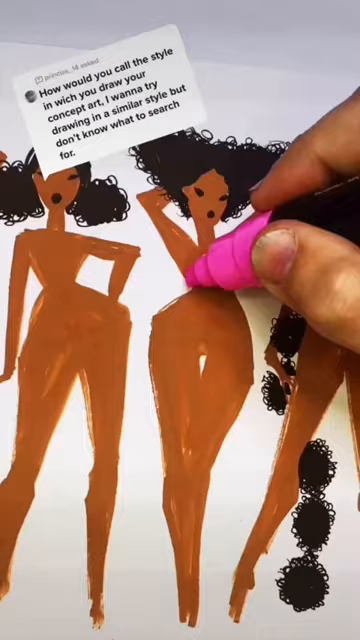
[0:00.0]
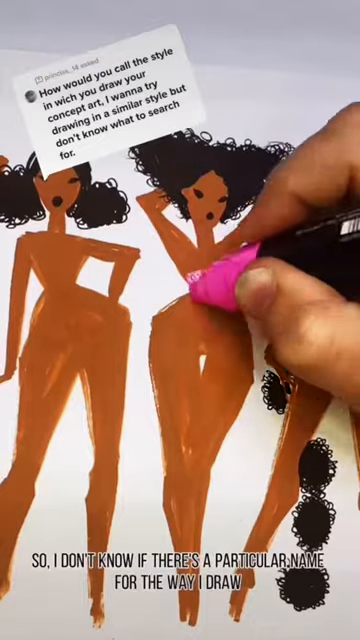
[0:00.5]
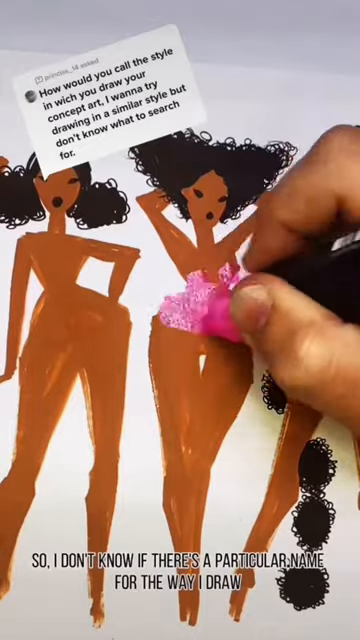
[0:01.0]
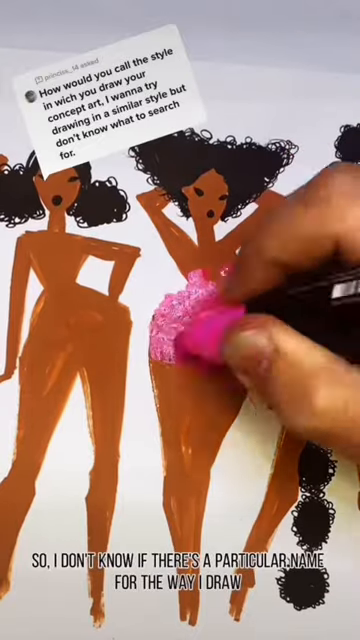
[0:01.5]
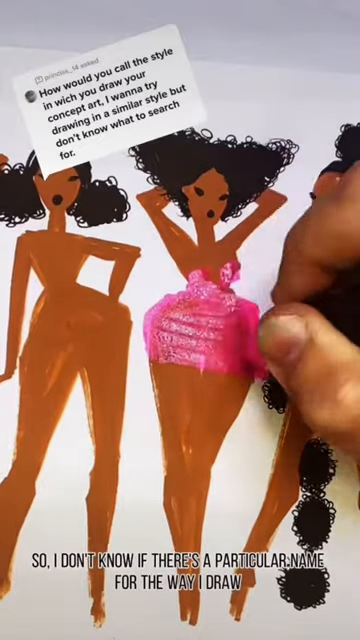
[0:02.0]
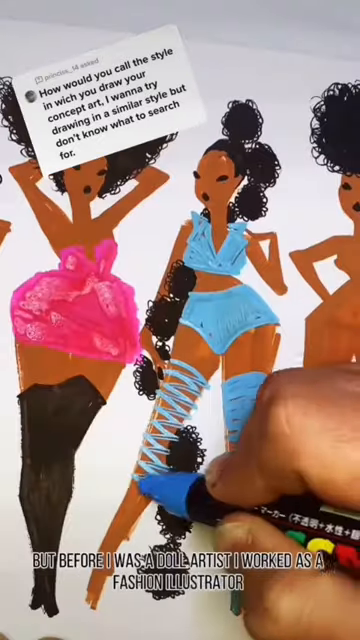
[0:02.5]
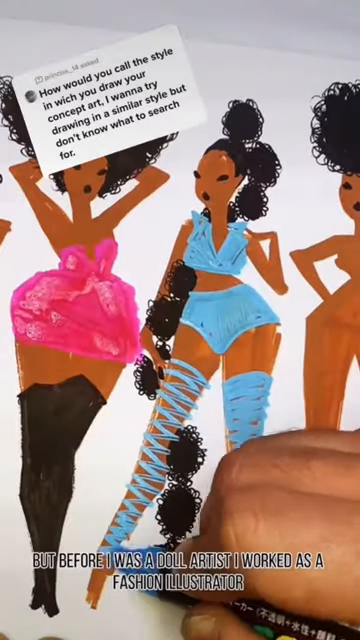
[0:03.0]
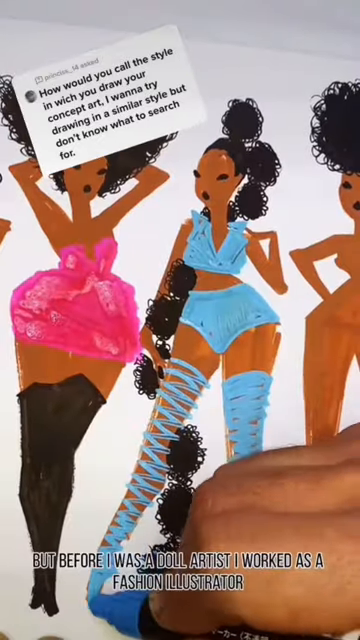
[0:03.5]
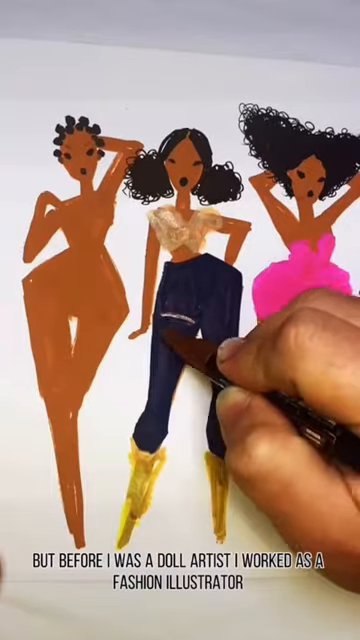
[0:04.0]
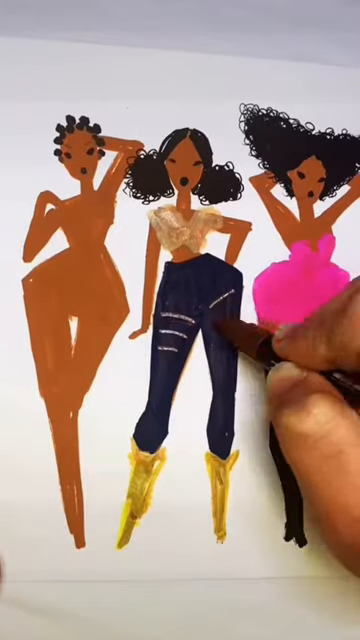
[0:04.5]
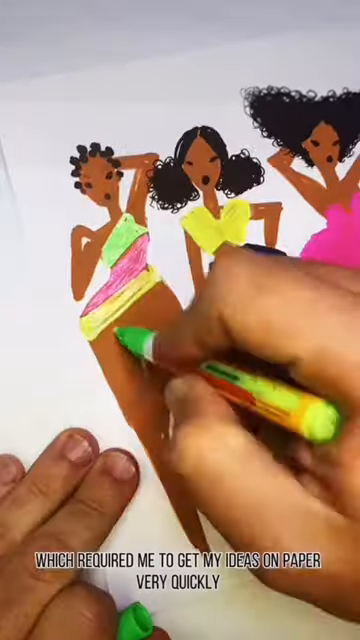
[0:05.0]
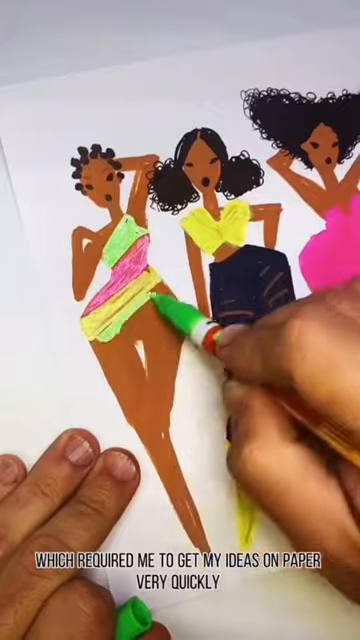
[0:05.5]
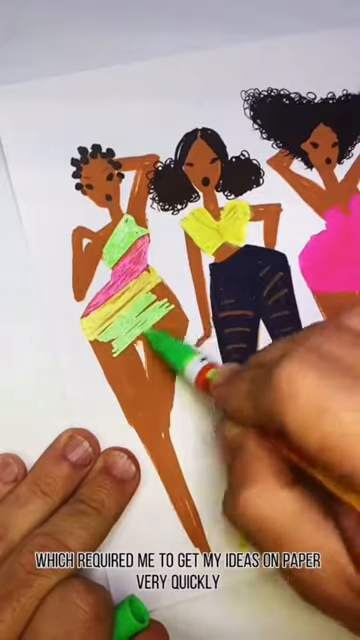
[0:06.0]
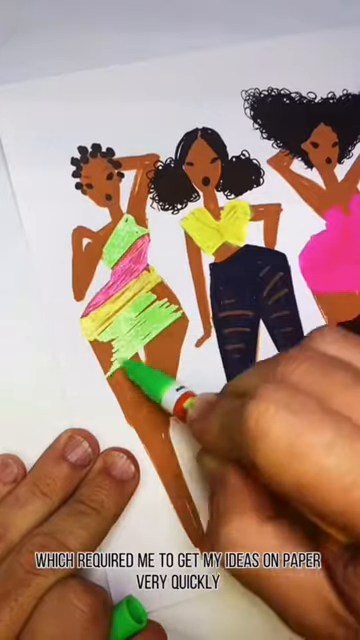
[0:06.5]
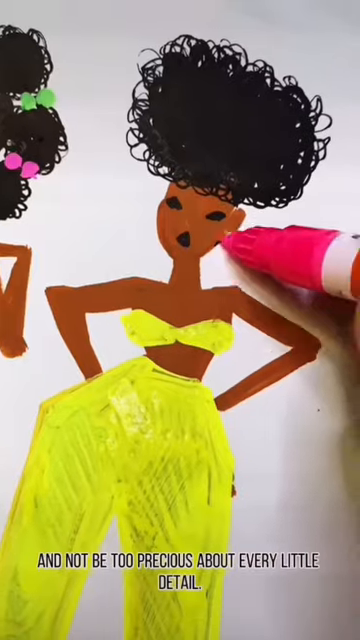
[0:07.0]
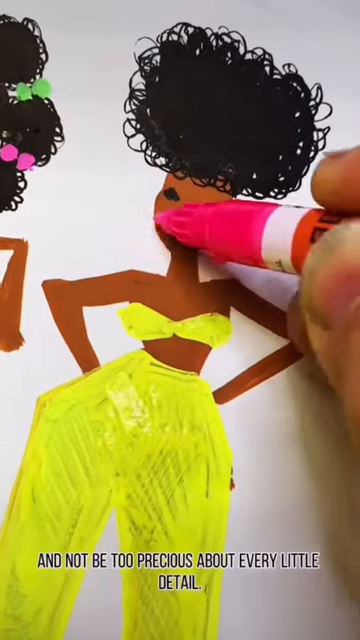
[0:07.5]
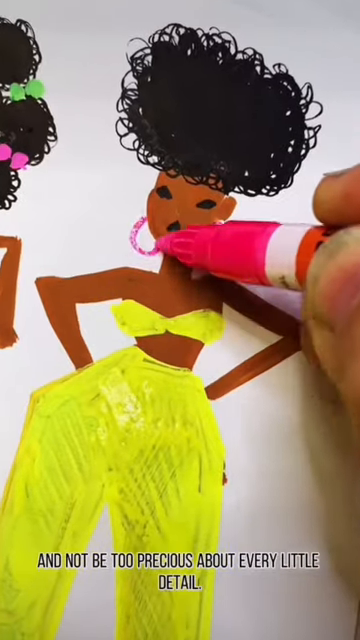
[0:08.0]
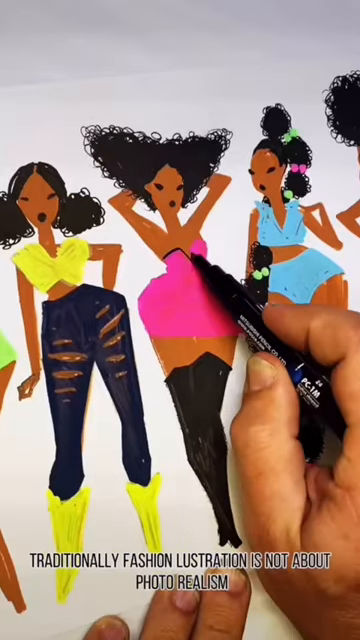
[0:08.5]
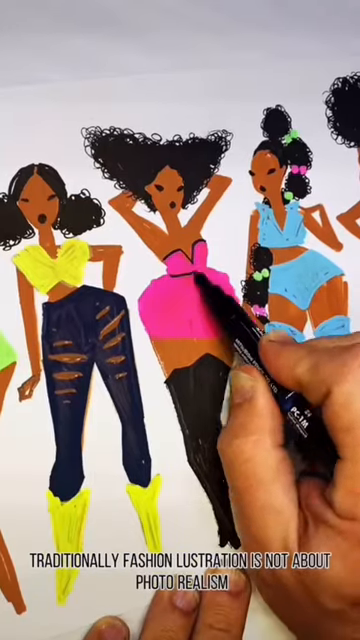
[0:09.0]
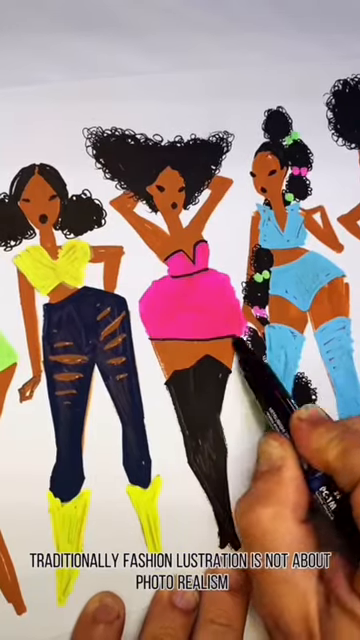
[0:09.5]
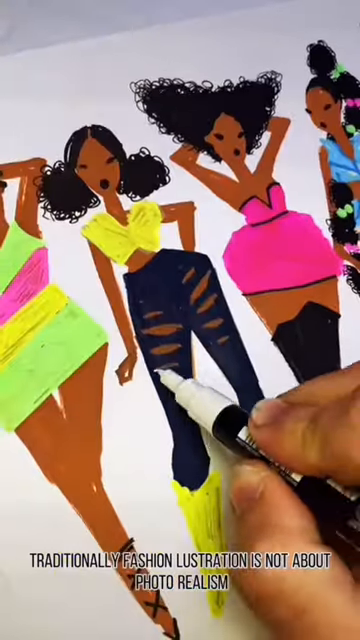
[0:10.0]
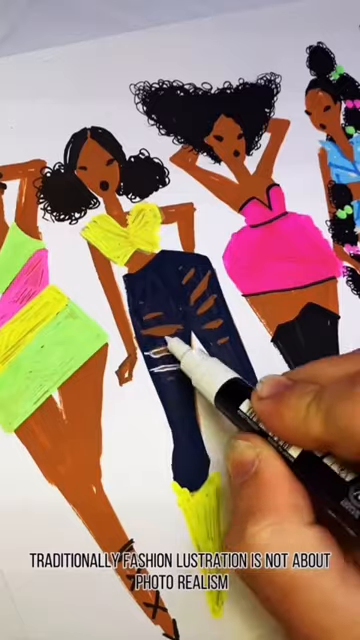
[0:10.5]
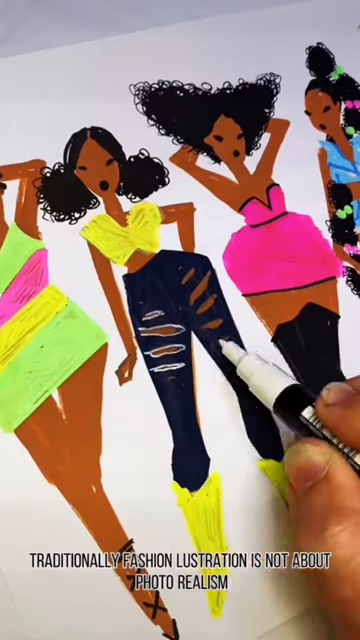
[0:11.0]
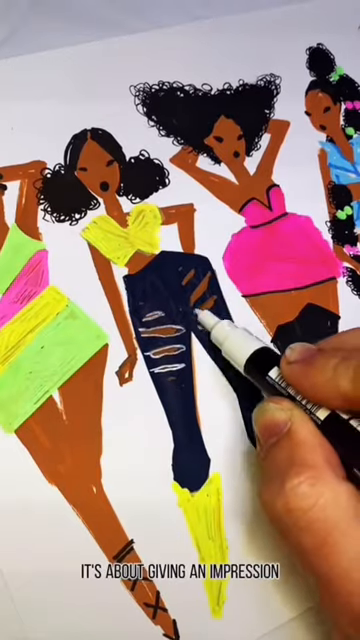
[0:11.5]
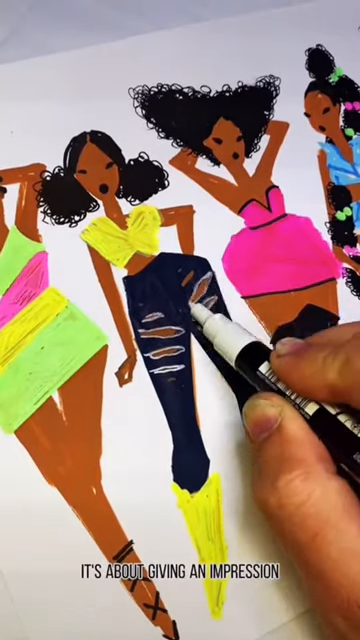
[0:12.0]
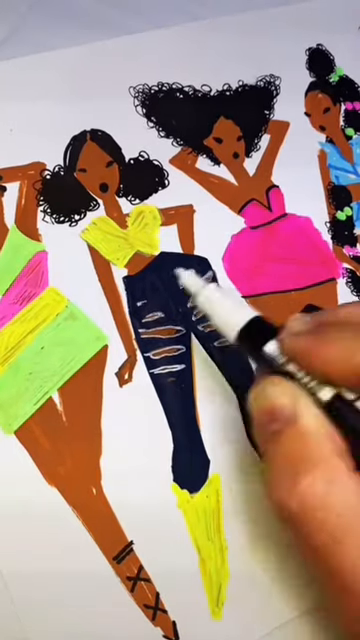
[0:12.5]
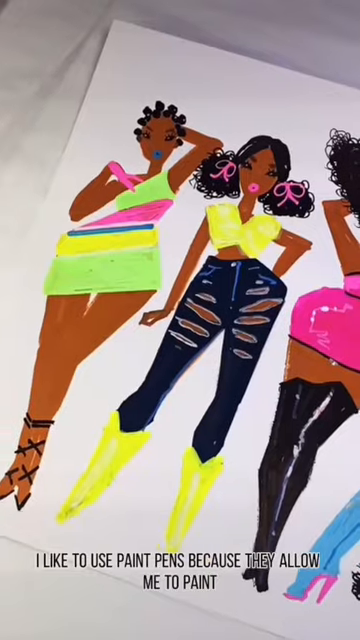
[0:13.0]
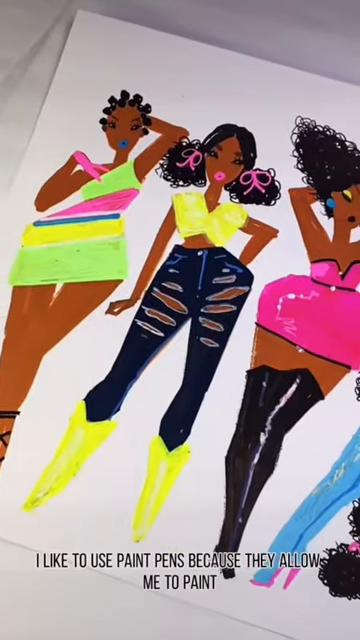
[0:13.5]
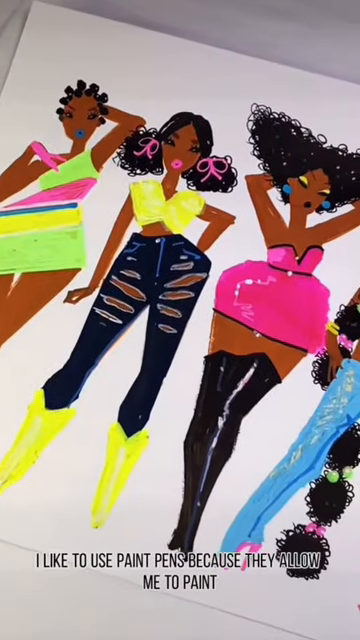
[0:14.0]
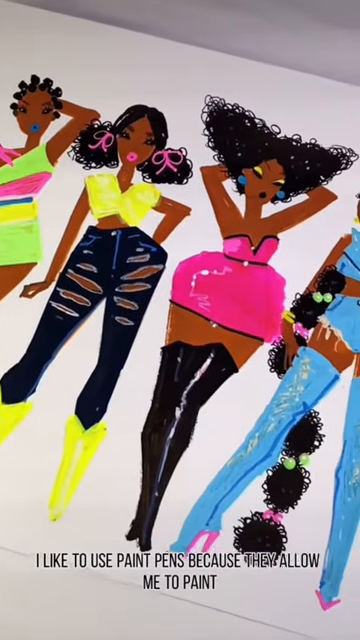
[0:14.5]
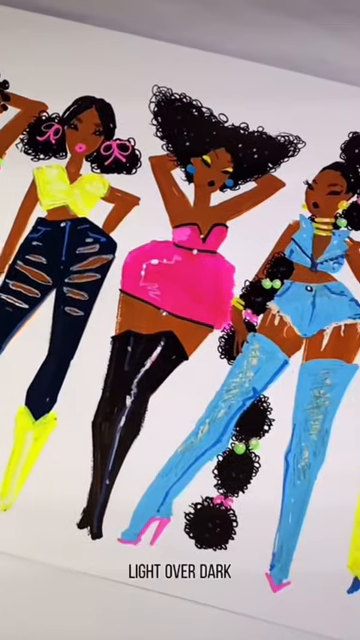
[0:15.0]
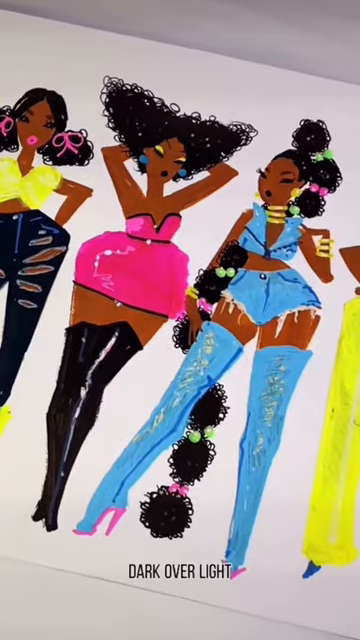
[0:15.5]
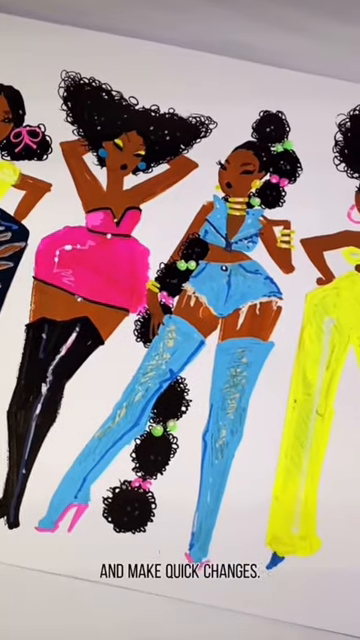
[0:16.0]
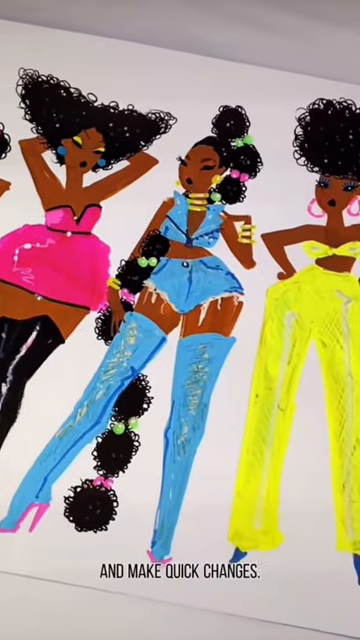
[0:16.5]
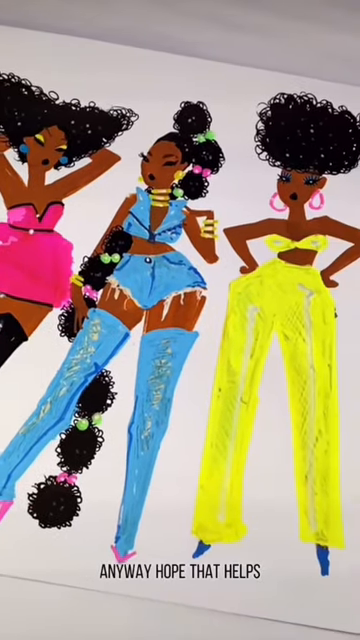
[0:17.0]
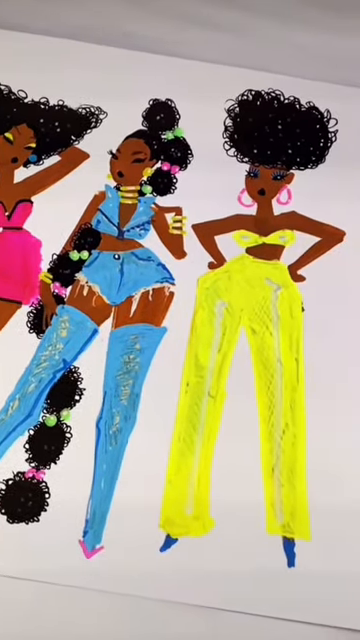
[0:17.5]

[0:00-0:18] The video is titled What is Fashion Illustration, by Pigeondoll. A person is doing illustrations of women in different outfits, as if they are modeling them. There is a pink outfit, a blue outfit, and a bright yellow outfit. The pink outfit is a dress with black thigh-high boots. The yellow outfit is a pair of pants with a tube top. The blue outfit is a pair of short shorts with what looks like a denim bikini top. There is also a striped yellow and pink dress, worn with pumps that have tie-ups going up the leg. Another outfit is a yellow crop top with a pair of ripped jeans and knee-high yellow boots. Most of the outfits have thigh-high boots, and each figure has a different hairstyle. He is drawing and showing what fashion illustration is.